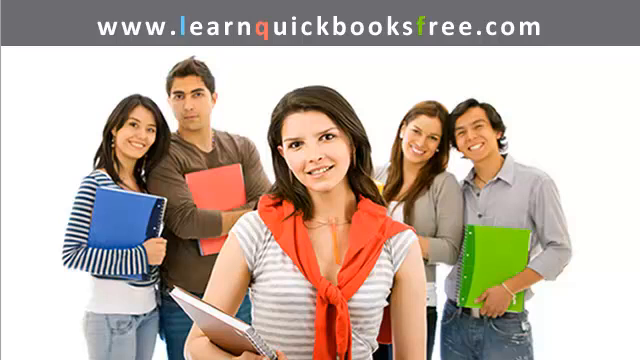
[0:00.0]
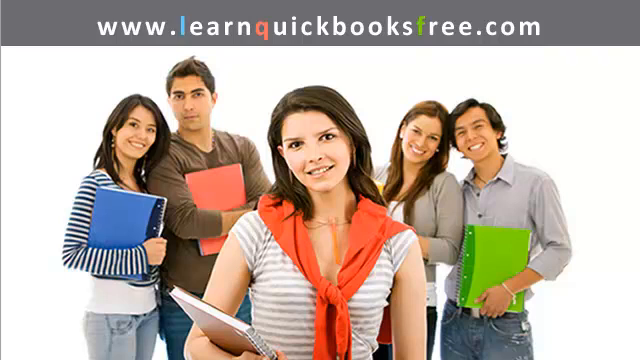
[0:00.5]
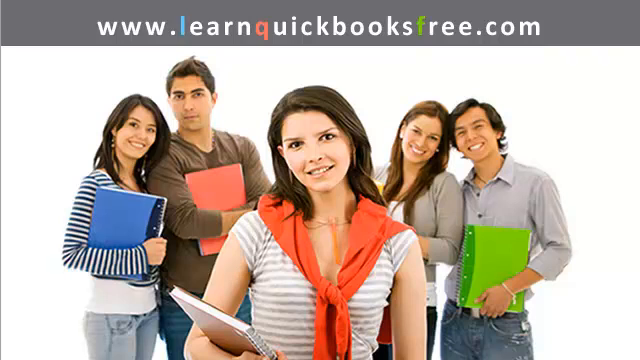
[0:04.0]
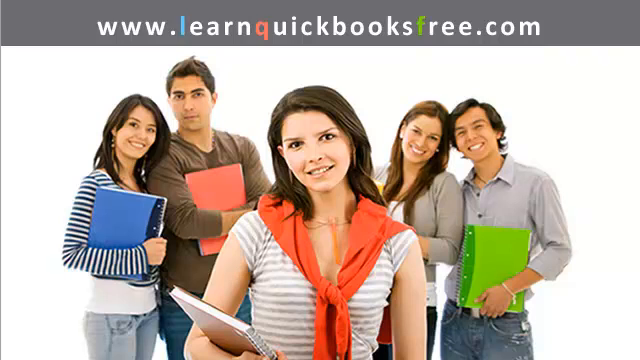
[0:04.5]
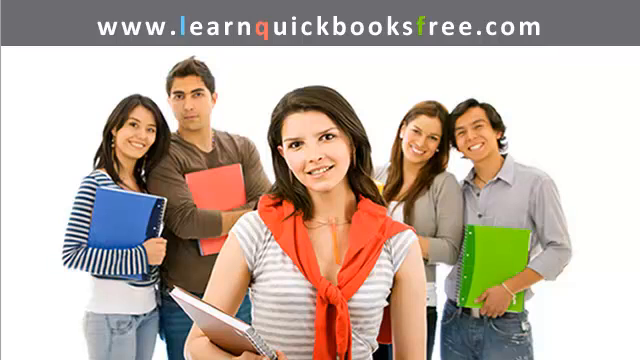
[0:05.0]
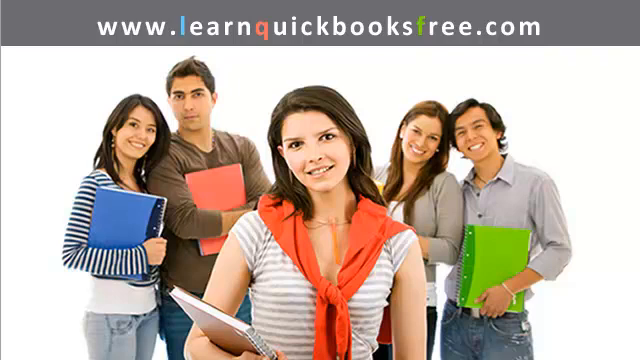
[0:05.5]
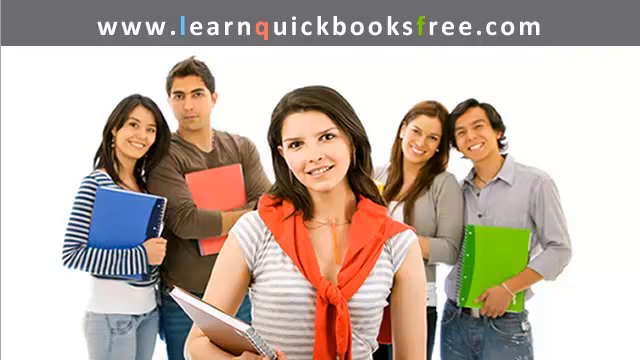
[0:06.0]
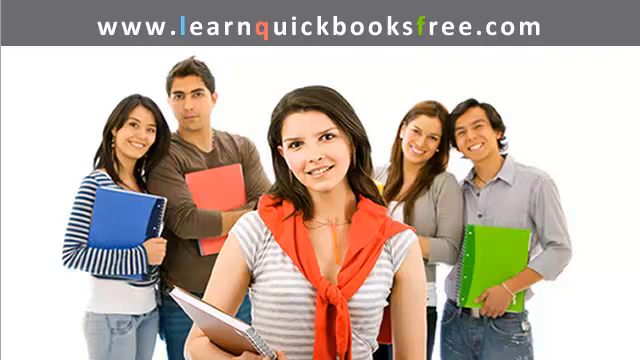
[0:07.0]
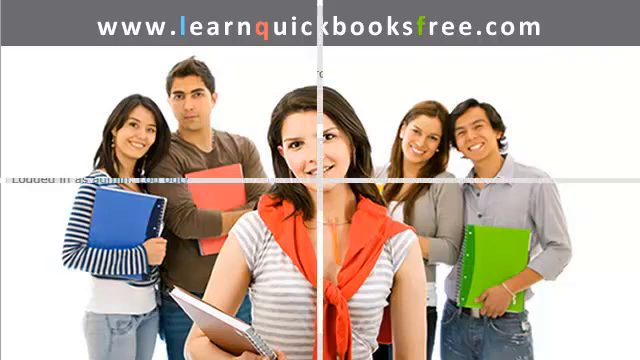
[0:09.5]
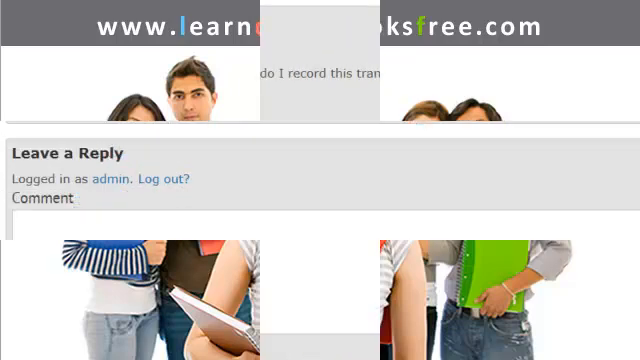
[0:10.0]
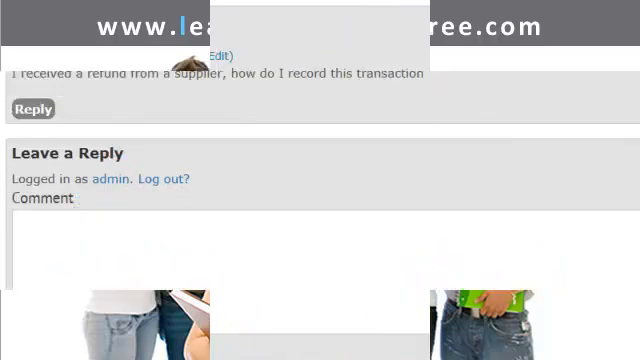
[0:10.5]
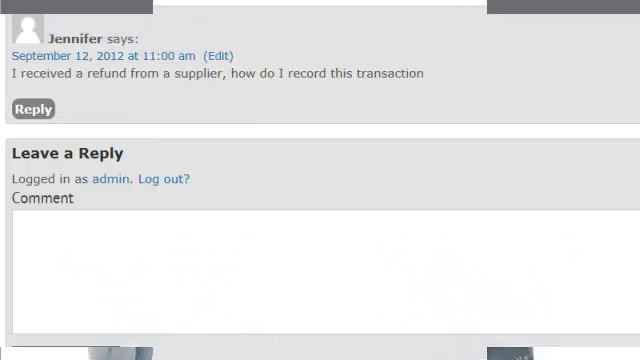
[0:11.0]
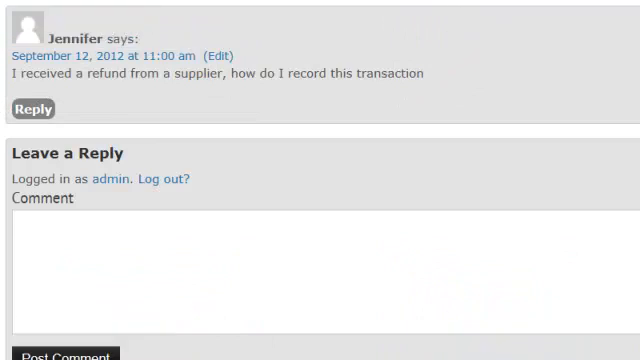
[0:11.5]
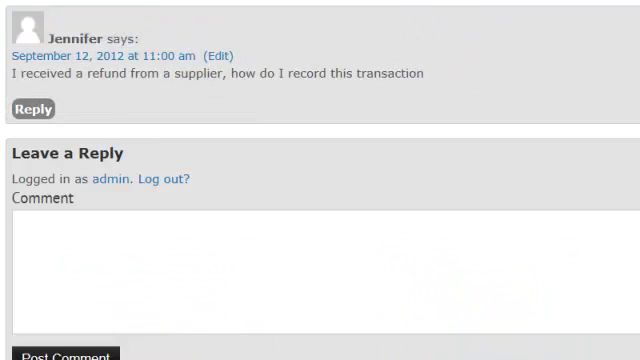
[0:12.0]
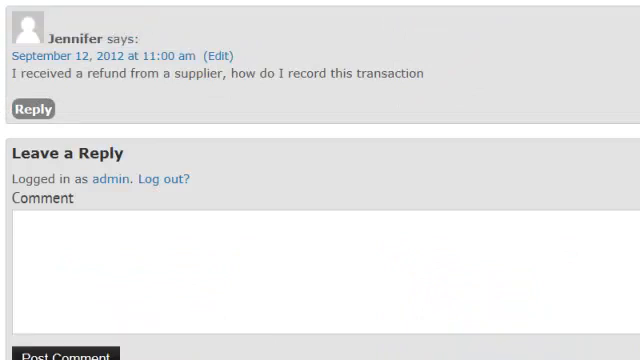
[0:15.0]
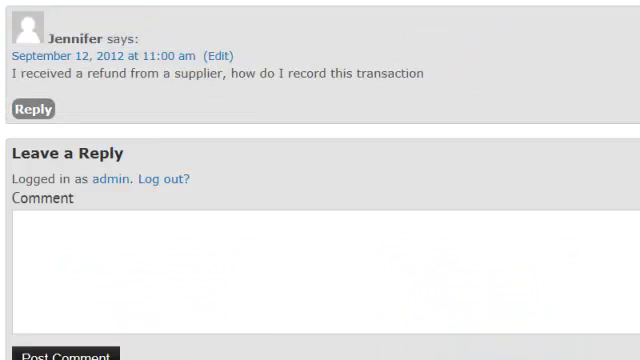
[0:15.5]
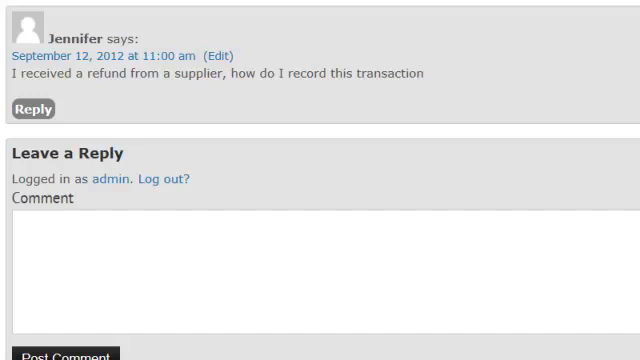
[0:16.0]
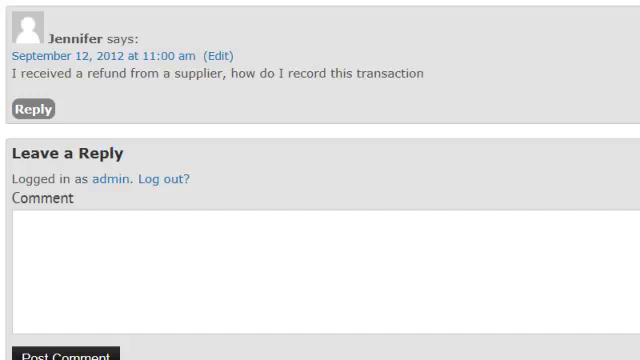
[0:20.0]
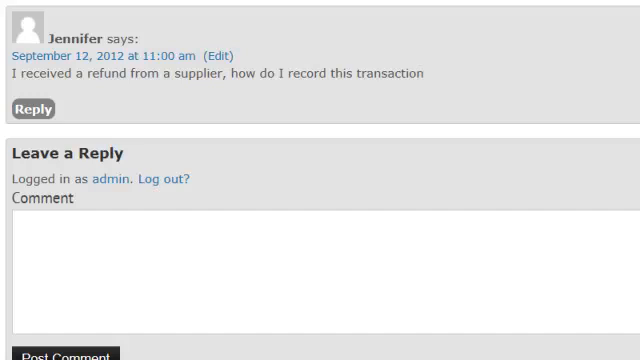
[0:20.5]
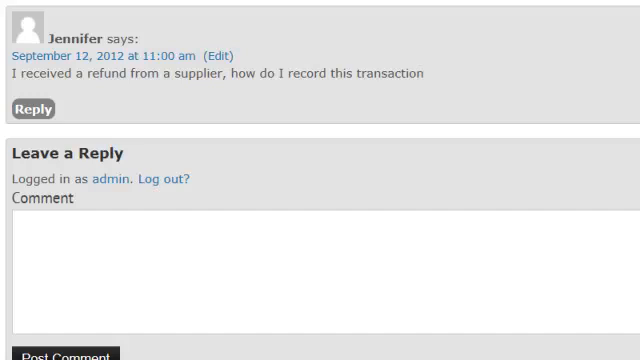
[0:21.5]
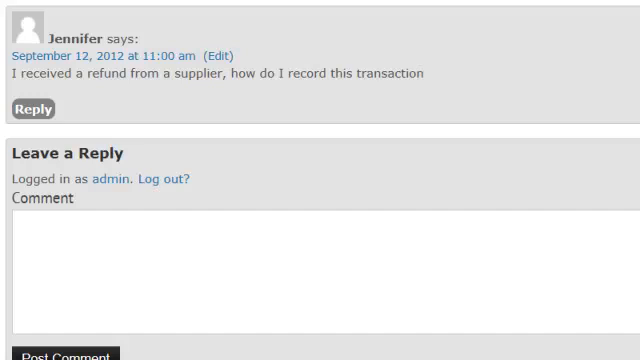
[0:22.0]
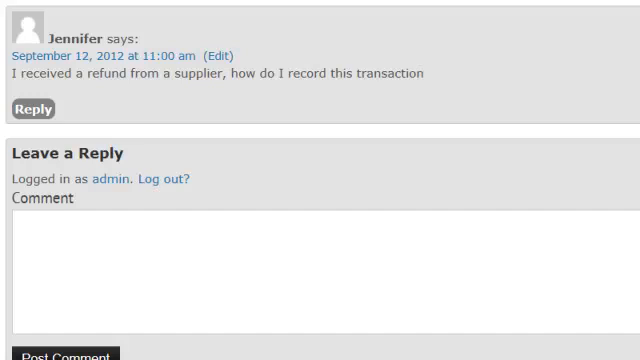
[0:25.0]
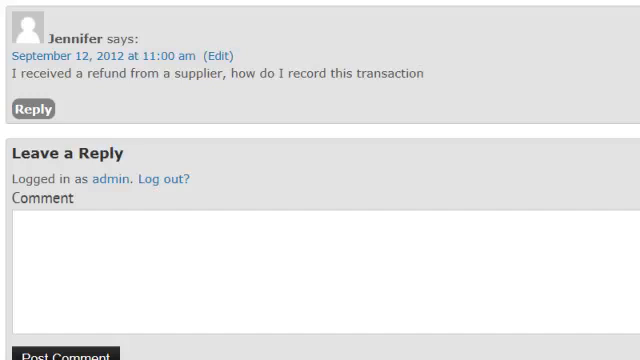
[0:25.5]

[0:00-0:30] A group of people from apparently different social groups, dressed differently, look at the camera, seemingly smiling and happy. A girl in a white shirt with black stripes holds a blue notebook, and a man in a brown shirt has a red notebook. Another girl wears a white shirt with gray stripes and a red bandana or sweater attached to her neck, and she has a brown notebook. A couple is in the background: a girl in some kind of beige sweater, whose notebook color cannot be seen except for a small piece sticking out that appears to be yellow, and a smiling man in a shirt with a green notebook. Text reading "www.learnquickbooksfree.com" appears.